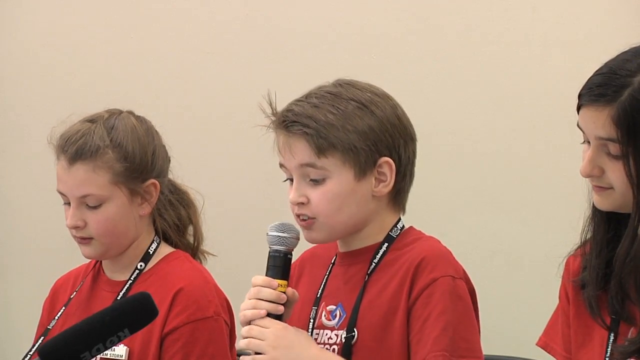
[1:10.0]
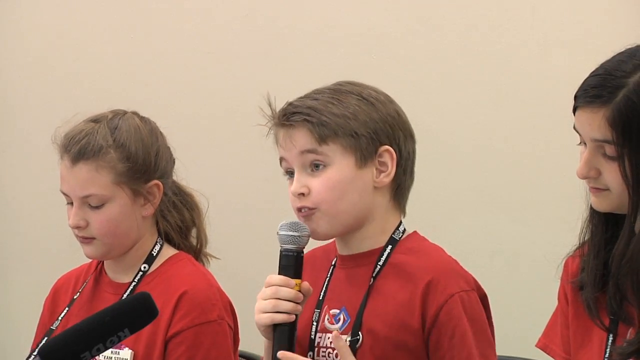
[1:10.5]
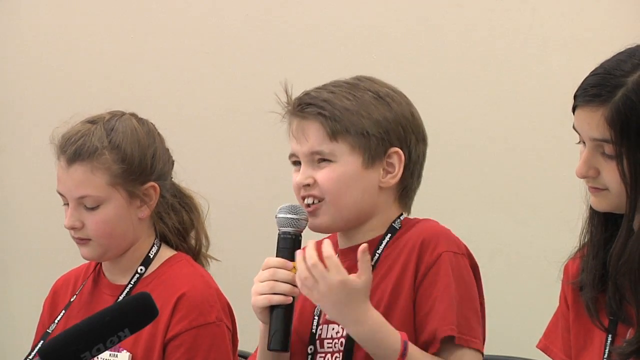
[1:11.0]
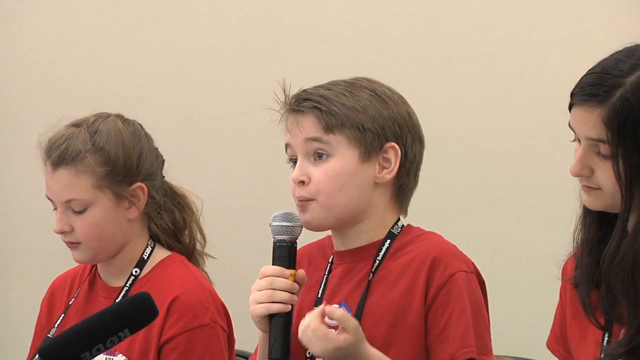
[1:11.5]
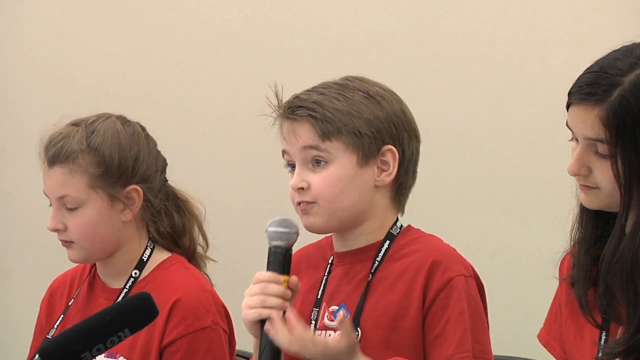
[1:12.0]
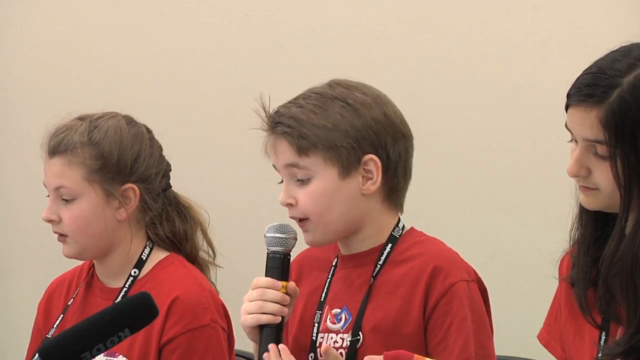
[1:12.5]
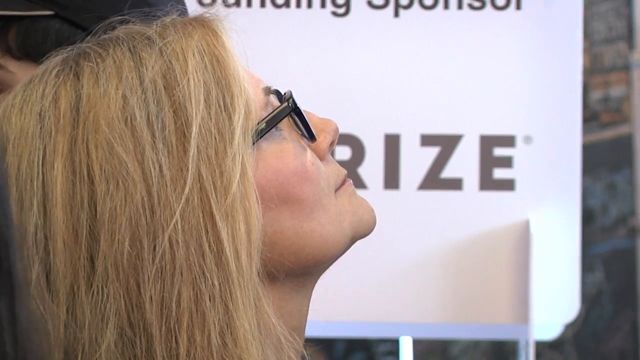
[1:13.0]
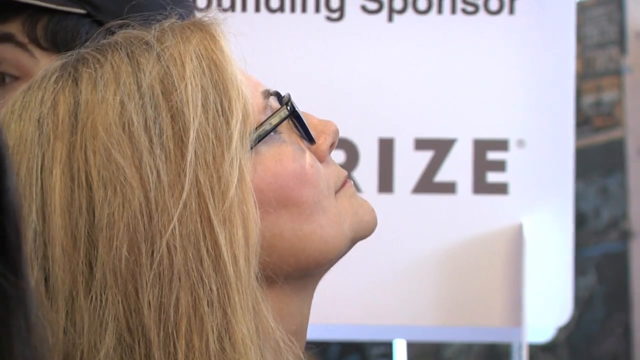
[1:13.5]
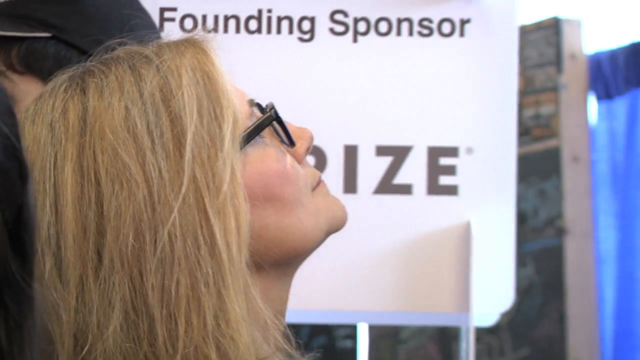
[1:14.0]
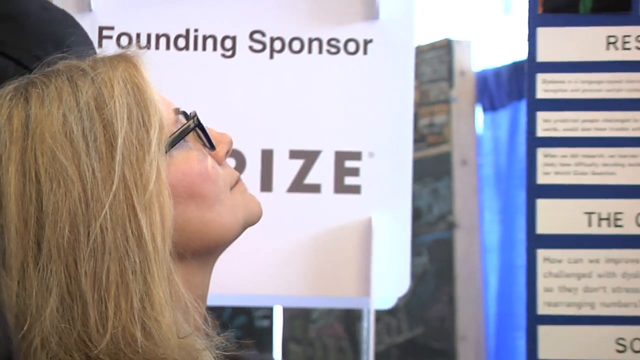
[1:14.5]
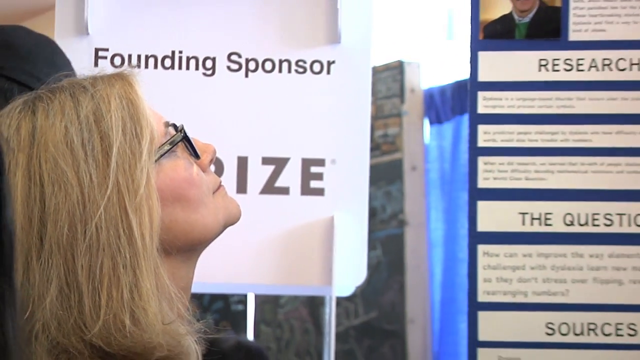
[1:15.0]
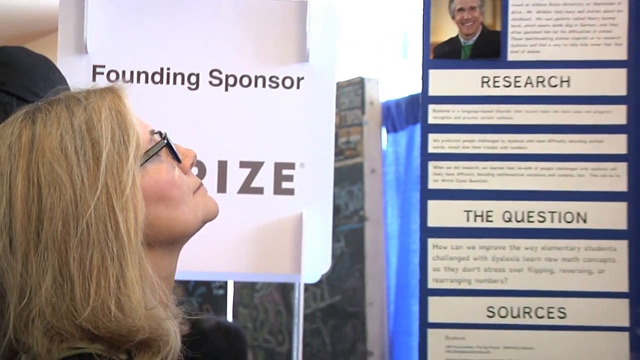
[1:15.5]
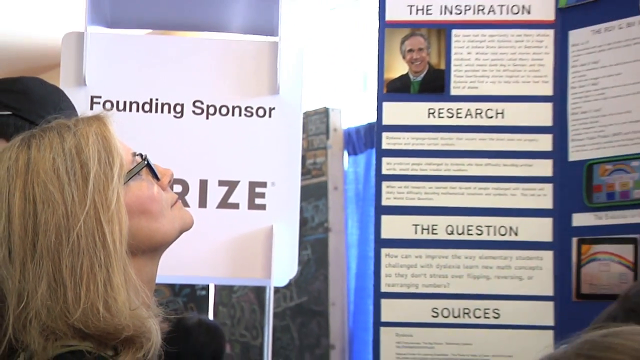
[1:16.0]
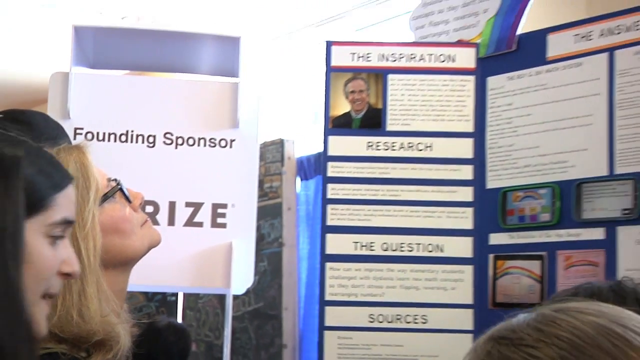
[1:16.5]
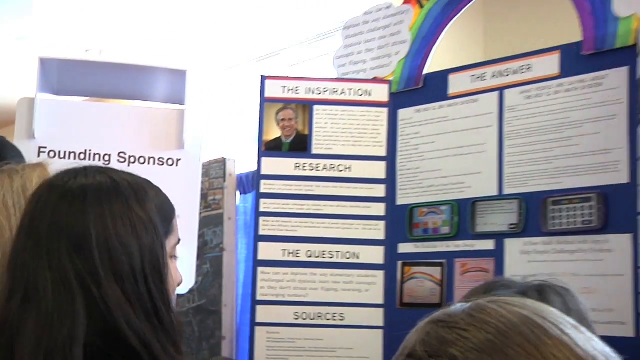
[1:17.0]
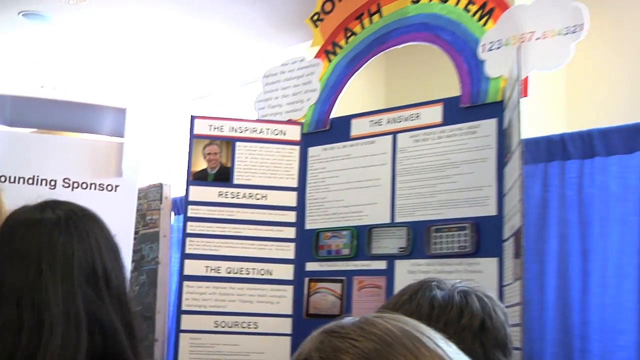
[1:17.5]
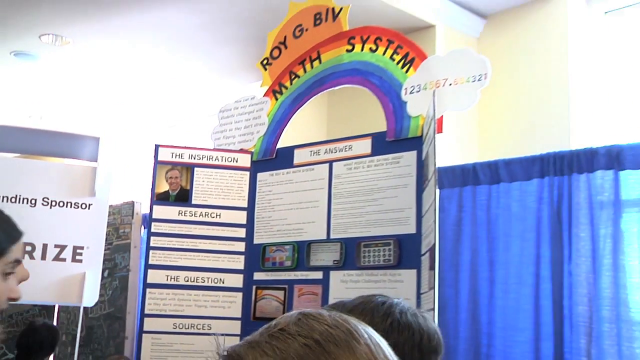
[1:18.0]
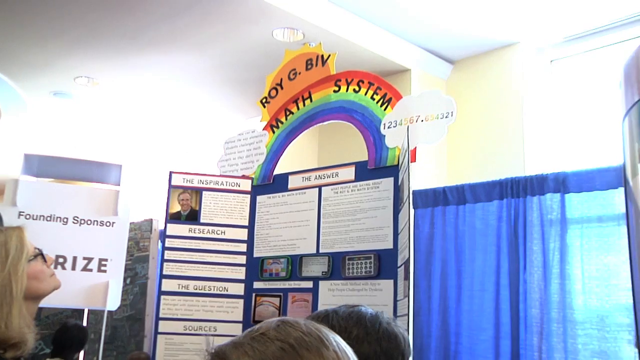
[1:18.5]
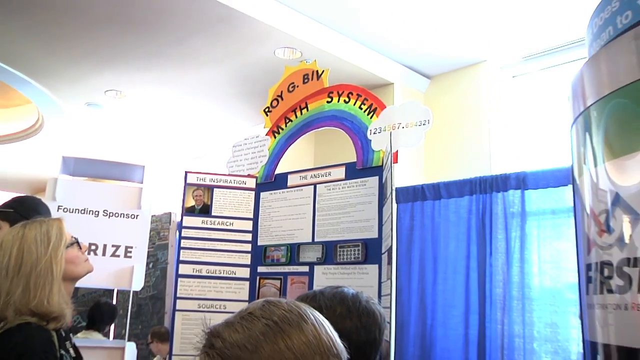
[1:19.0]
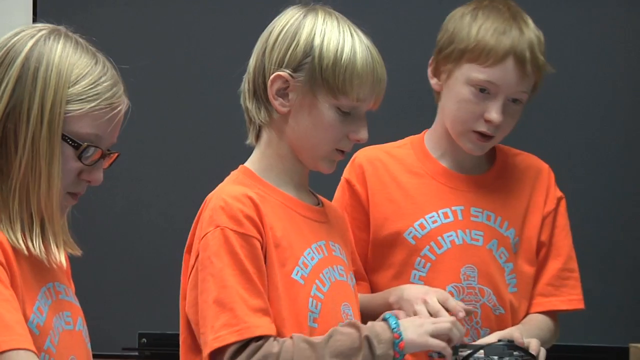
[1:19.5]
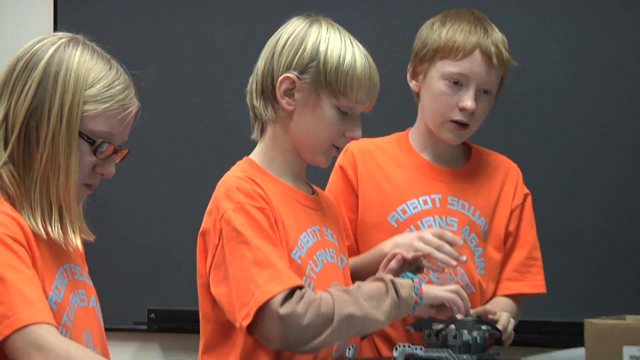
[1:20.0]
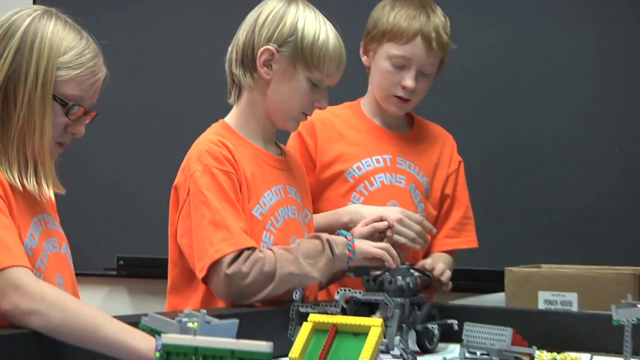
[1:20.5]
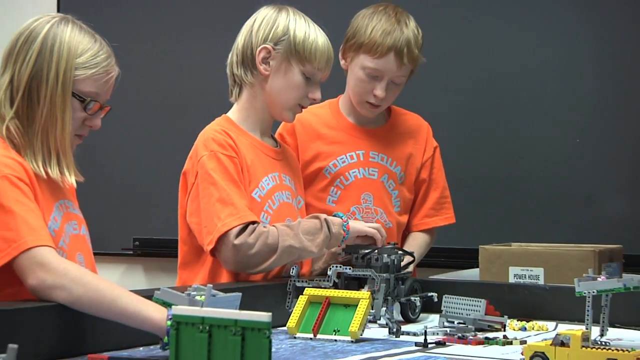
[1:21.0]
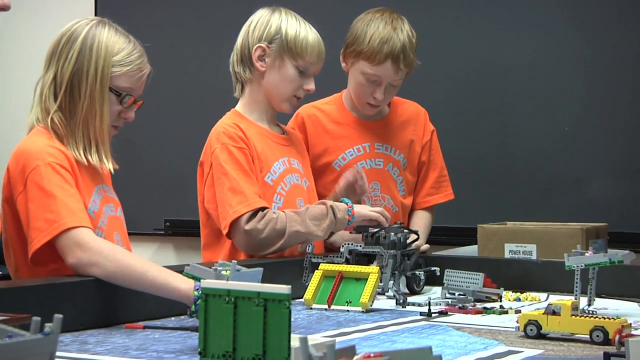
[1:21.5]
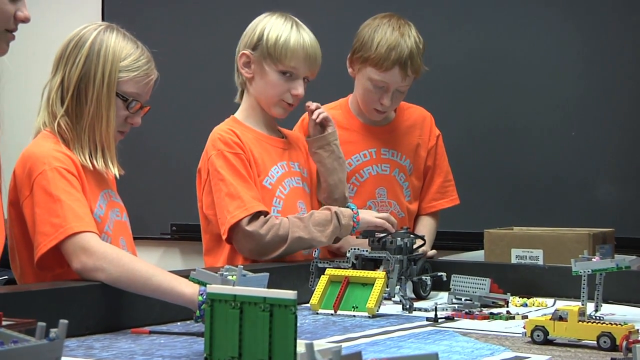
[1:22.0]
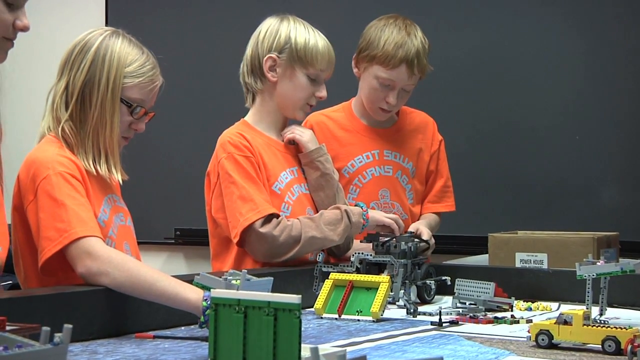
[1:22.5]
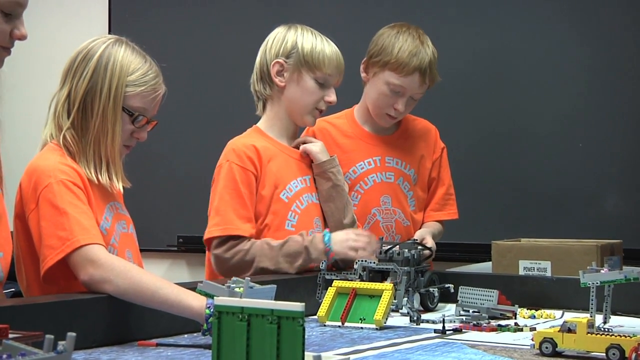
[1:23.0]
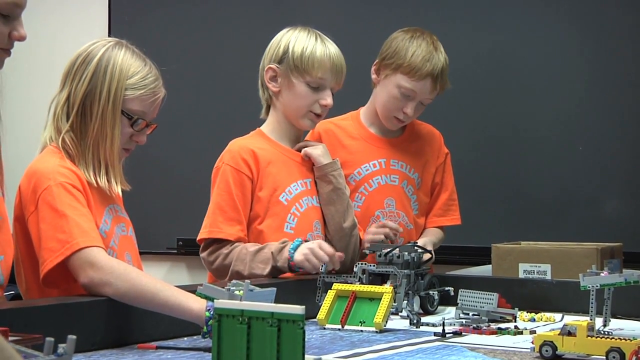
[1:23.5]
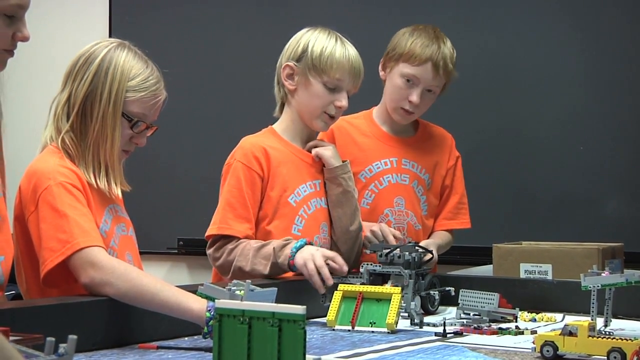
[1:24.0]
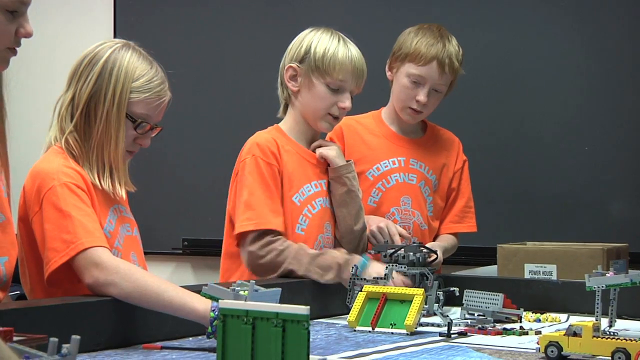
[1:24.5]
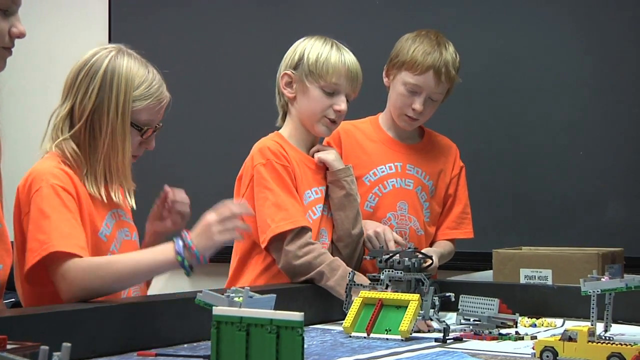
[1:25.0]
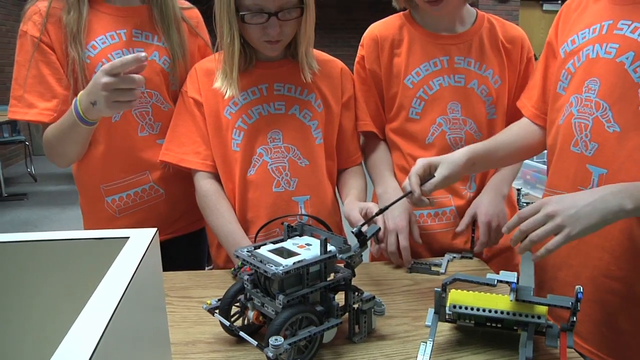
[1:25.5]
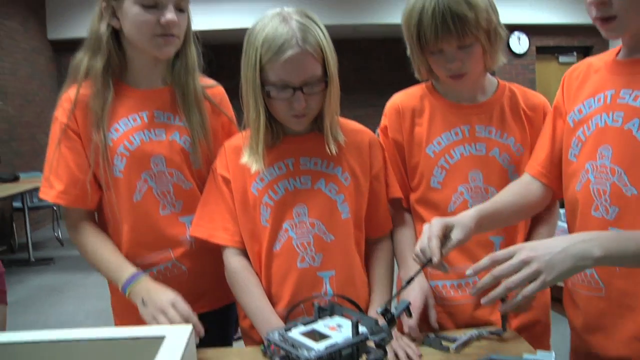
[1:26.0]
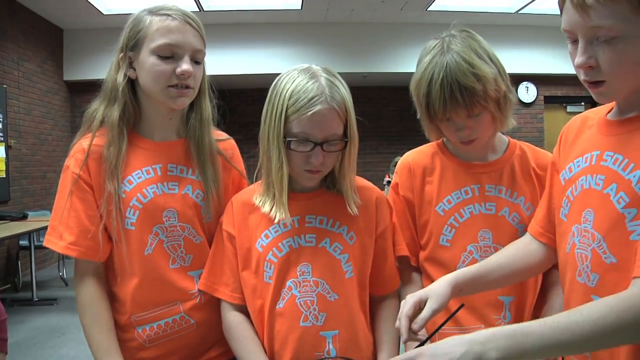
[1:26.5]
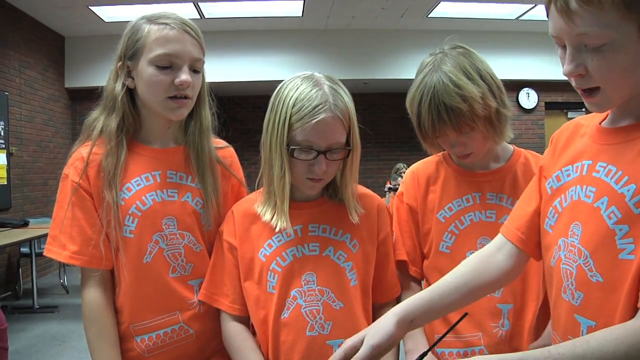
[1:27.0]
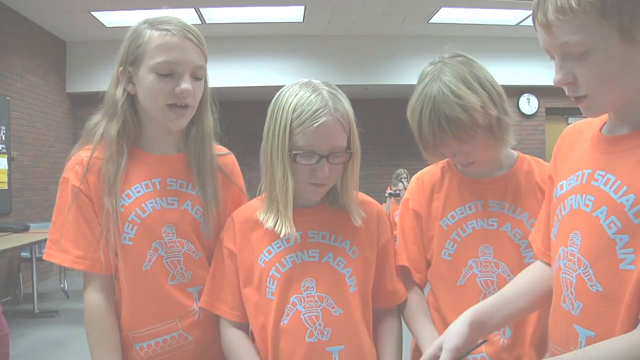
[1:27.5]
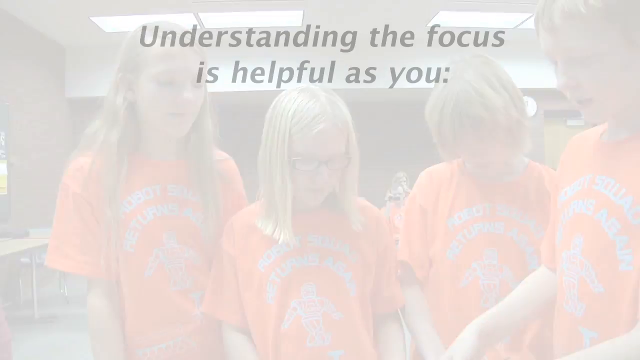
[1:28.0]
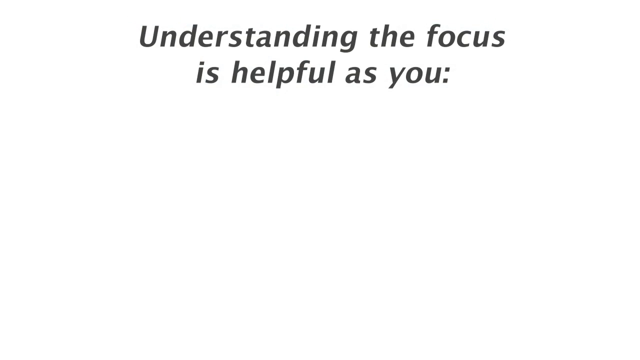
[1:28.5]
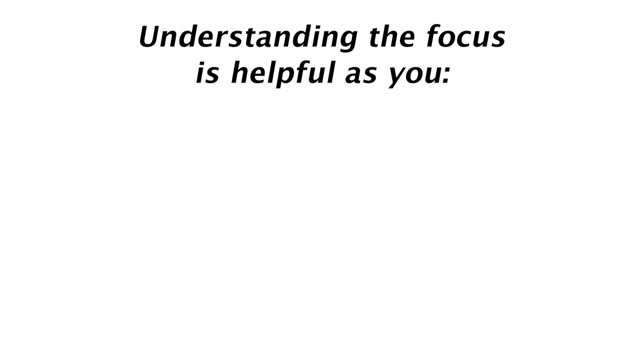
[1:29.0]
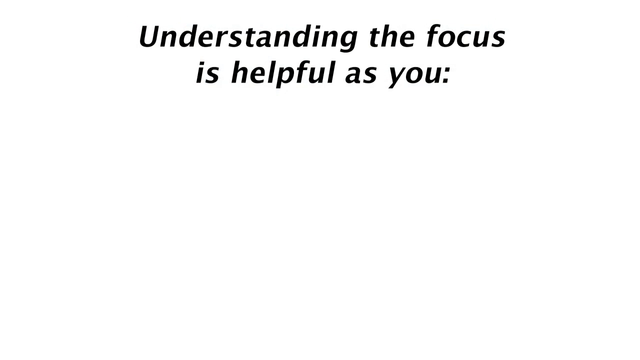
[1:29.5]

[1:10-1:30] Against a solid tan background, three students are in the foreground. On the left is a young girl with blonde hair who is looking down; she has a badge around her neck and wears a red shirt. In the center is a young man with his hair sticking up in the front, holding a microphone up to his mouth and looking down, apparently reading something. He has a lanyard around his neck and wears a red shirt that says "First" on it. On the right is a young girl who looks a little older than the other two, with long brown hair; she sits a little taller and also wears a red shirt. As the boy talks to the adults in the audience, a few of them are having a hard time understanding and keeping up. The video also shows a couple of scenes of young students learning to work on robotics and helping to design models.